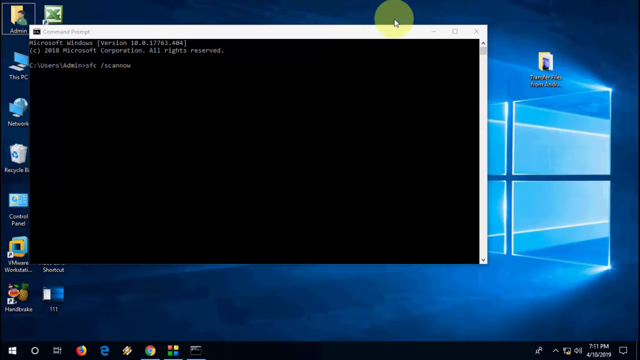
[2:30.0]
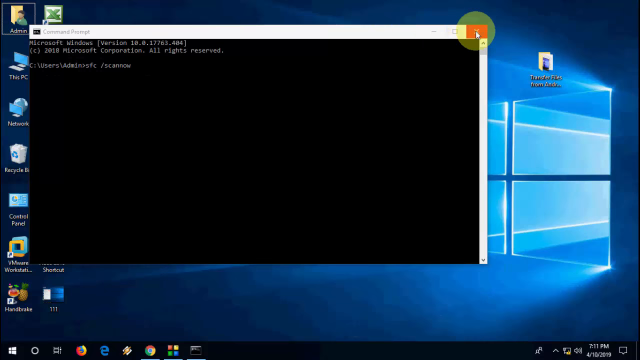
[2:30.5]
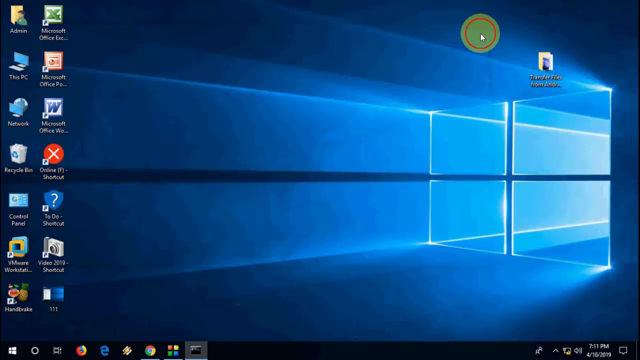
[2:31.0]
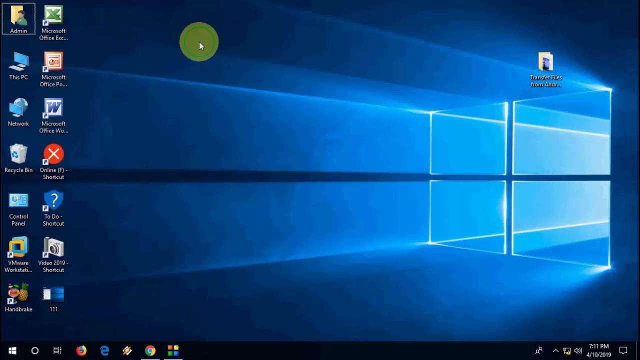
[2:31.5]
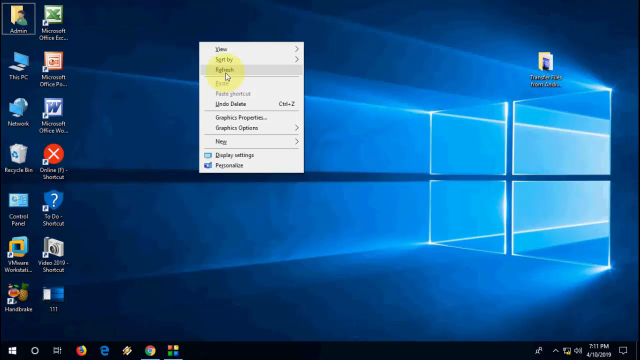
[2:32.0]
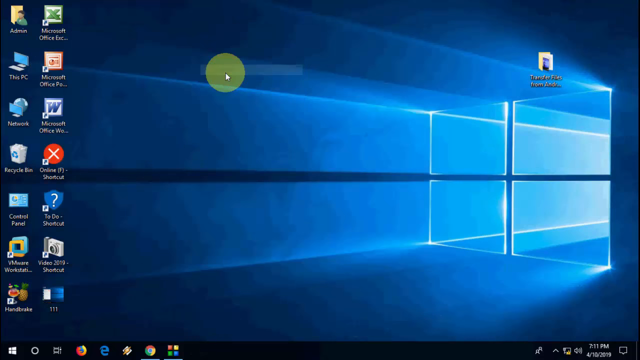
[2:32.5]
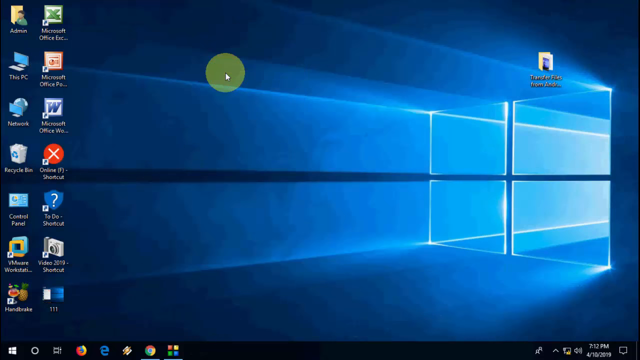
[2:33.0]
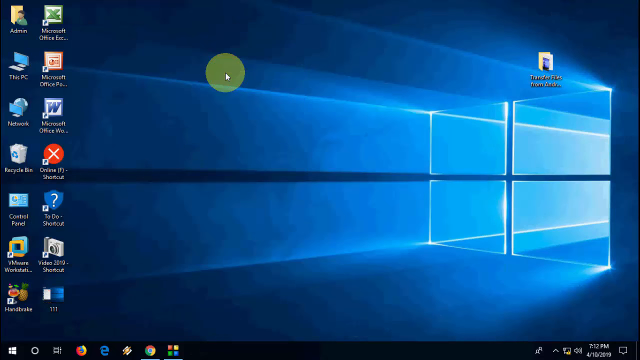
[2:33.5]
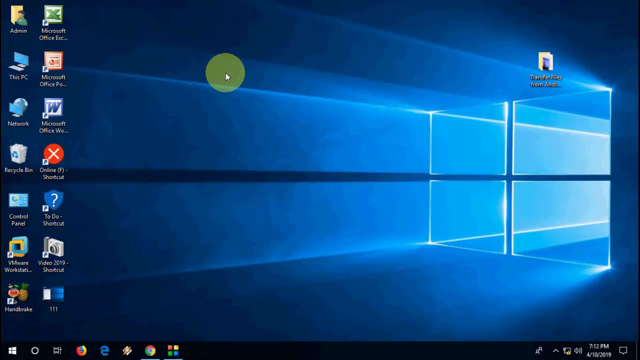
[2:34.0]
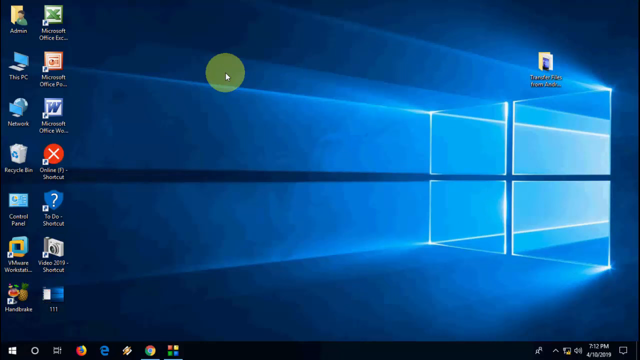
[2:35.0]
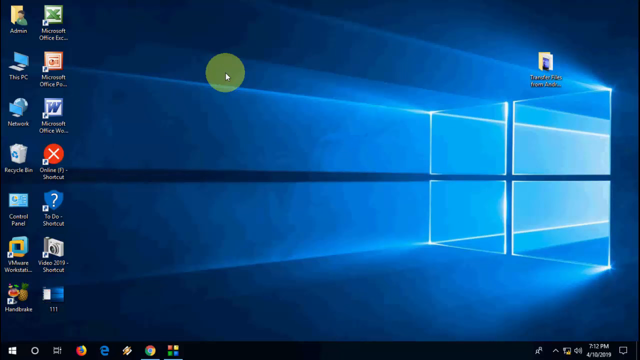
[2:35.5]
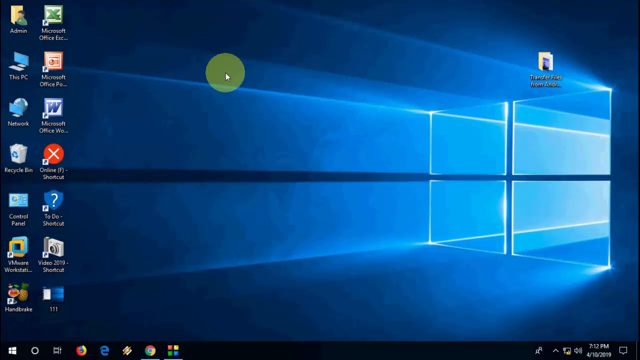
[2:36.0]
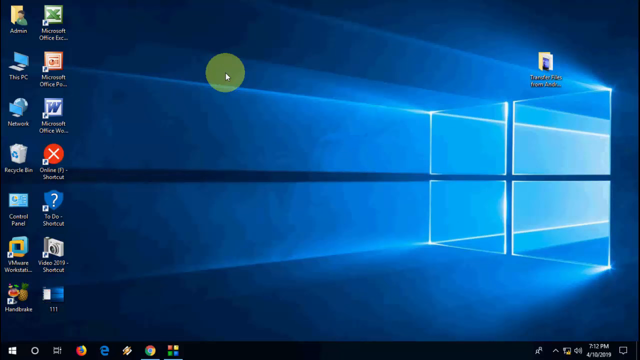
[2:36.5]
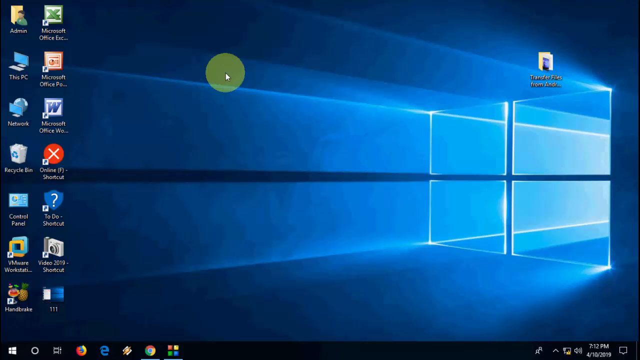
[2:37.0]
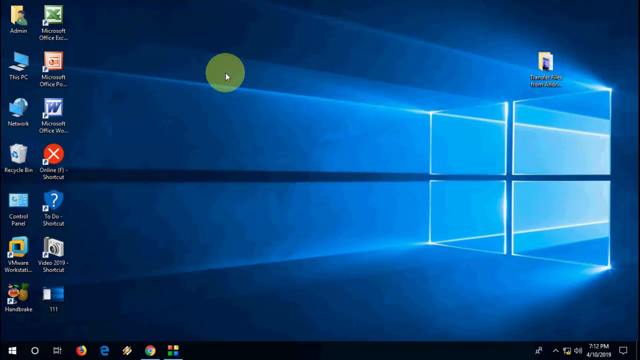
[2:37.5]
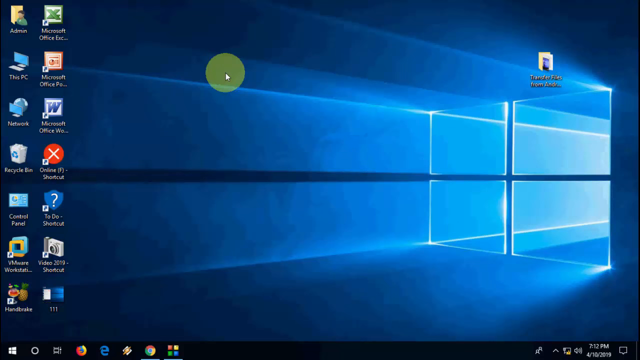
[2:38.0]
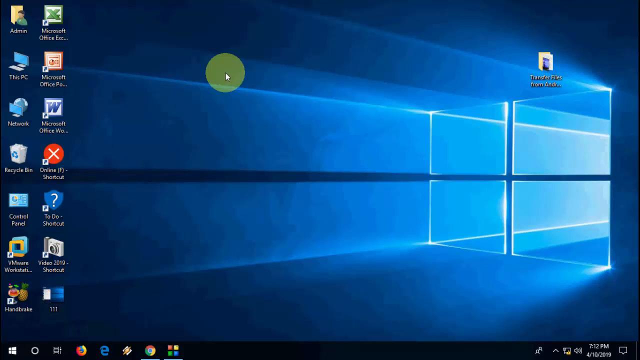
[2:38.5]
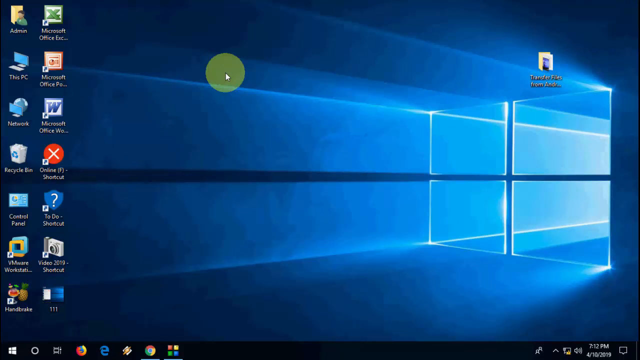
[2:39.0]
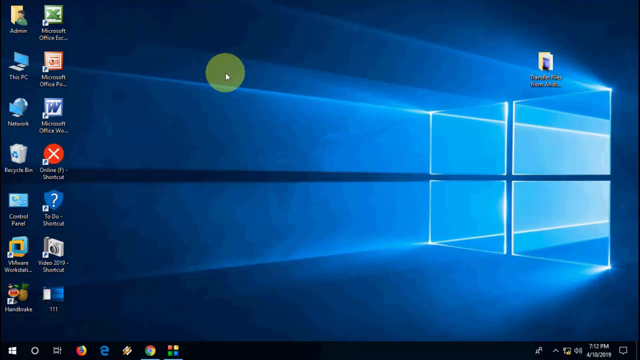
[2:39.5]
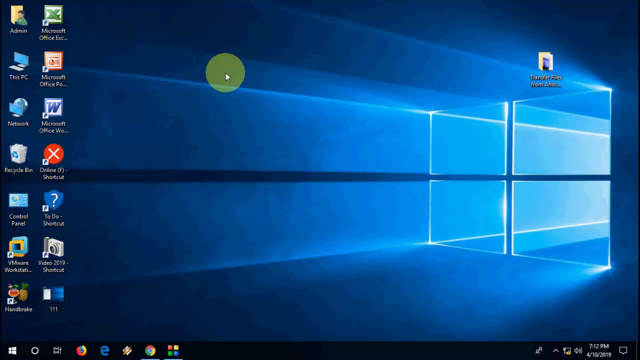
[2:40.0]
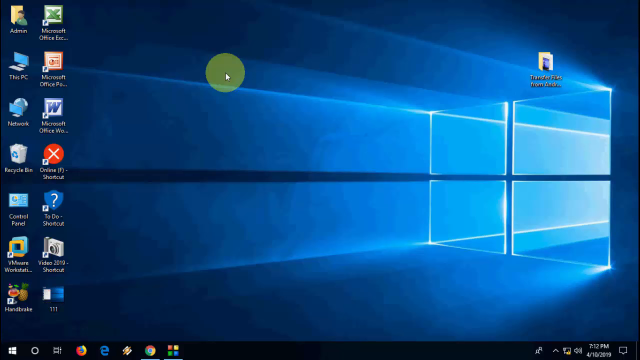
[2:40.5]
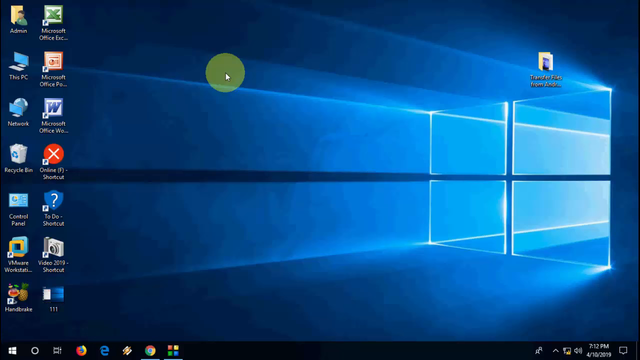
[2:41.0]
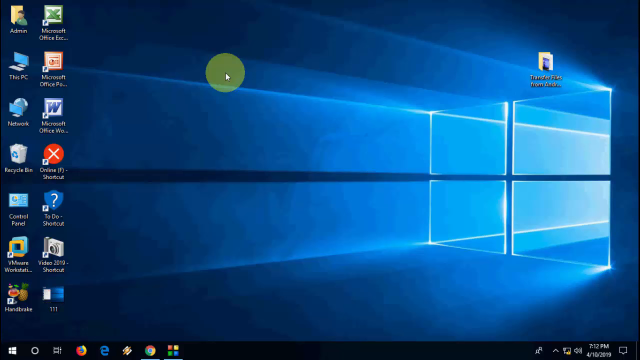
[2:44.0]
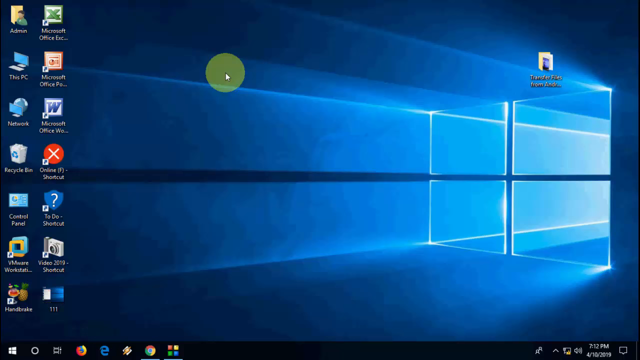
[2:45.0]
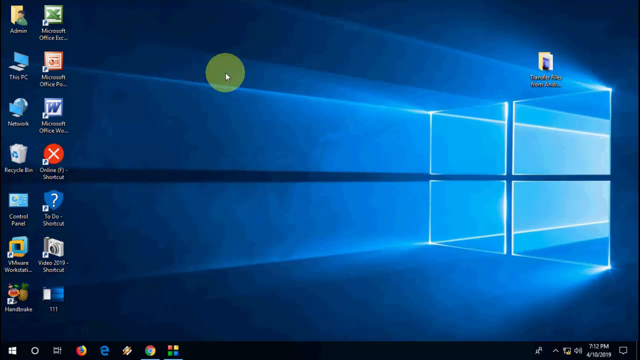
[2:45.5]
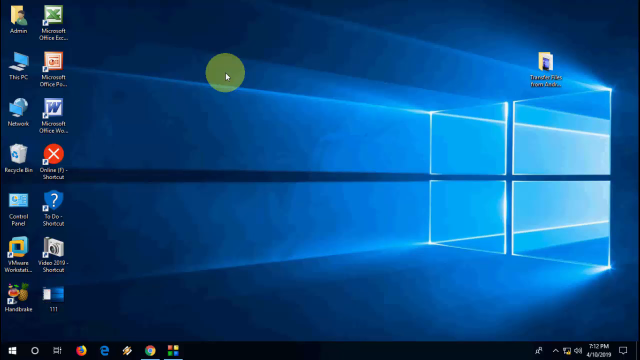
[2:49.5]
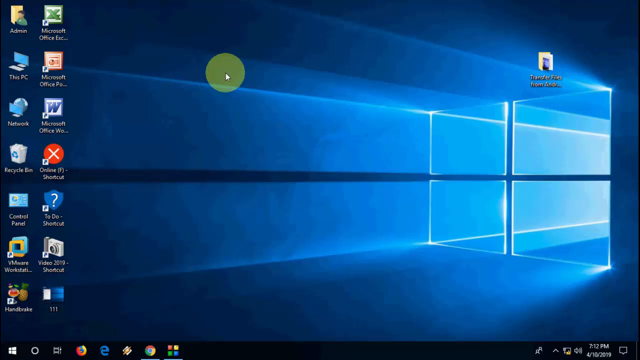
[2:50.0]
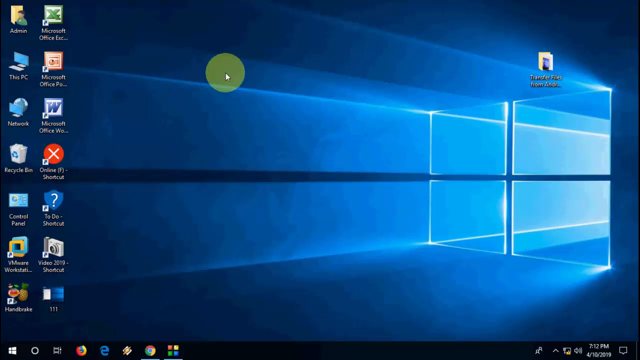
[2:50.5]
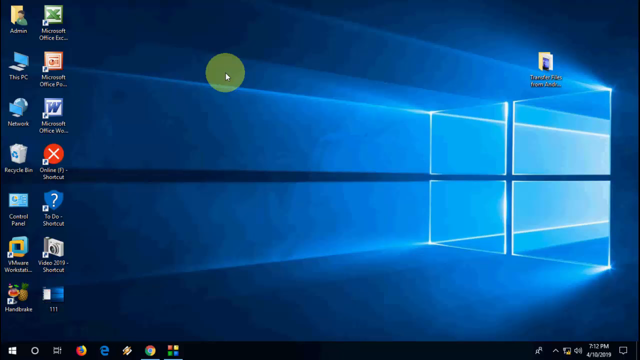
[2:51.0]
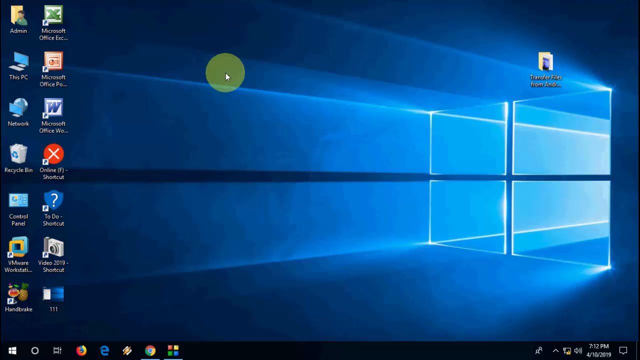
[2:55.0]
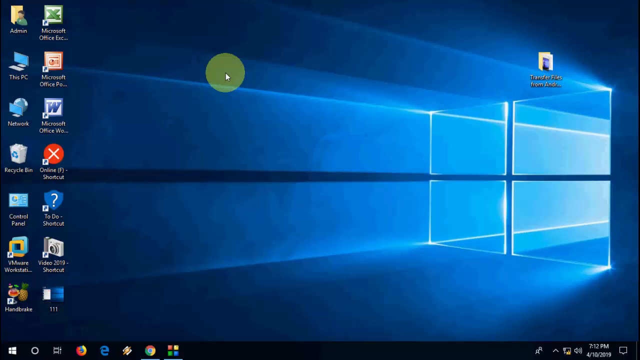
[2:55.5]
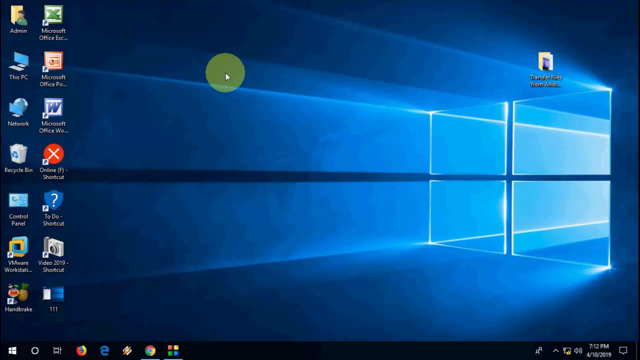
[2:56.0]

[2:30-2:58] The Windows screensaver is on the home page of a Windows PC desktop, with 14 shortcuts. A command prompt pop-up box is closed out, leaving a cursor with a circle around it; the circle is yellow but appears green against the blue of the Windows screensaver. The command prompt box returns and is closed out again. The screensaver with the Windows logo remains, along with the desktop shortcuts: Admin, Microsoft Office, Disk PC, Microsoft Office Plus, Recycle, Network, online shortcut, To-do shortcut, control panel, Word, Works Station, Video Shortcut, and two more whose names cannot be read. The cursor with its circle, which appears green but is really yellow, stays on the desktop.